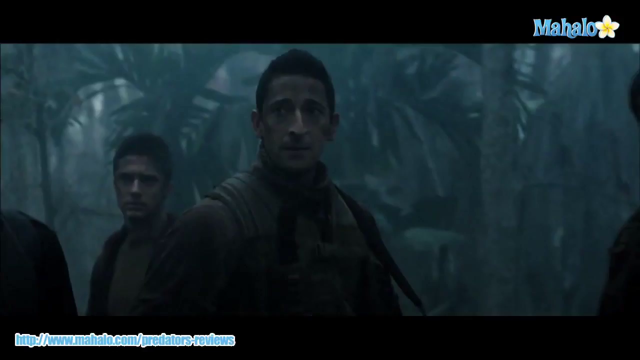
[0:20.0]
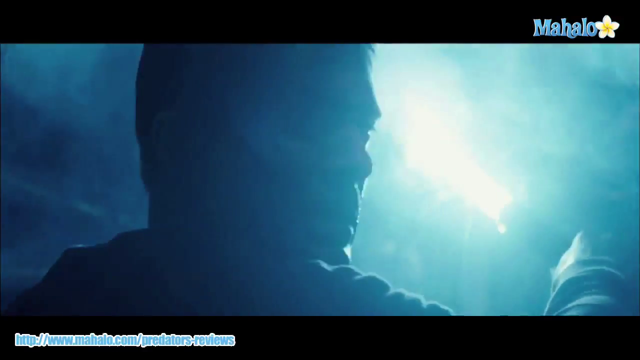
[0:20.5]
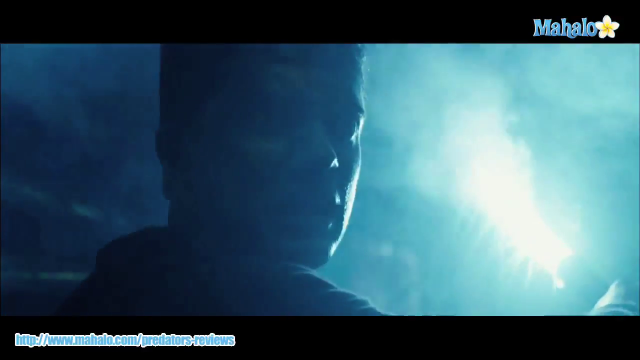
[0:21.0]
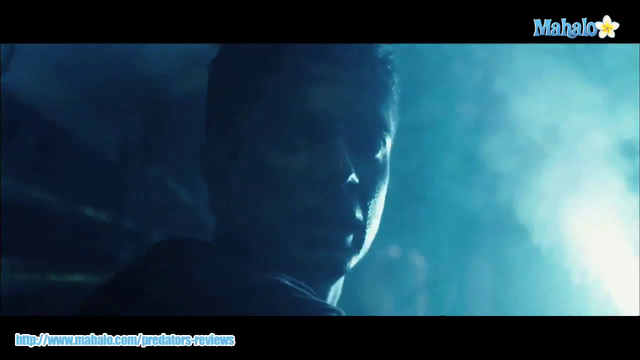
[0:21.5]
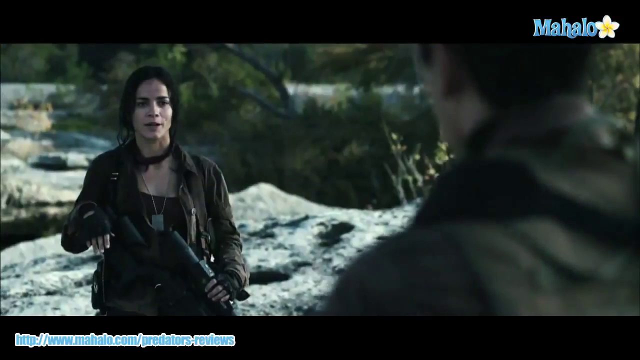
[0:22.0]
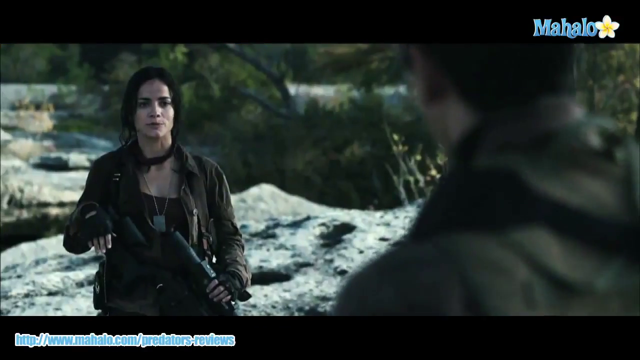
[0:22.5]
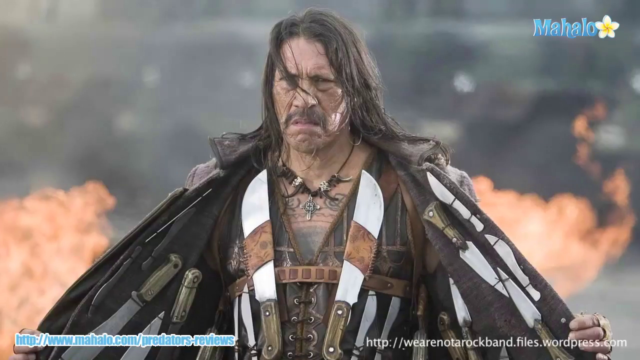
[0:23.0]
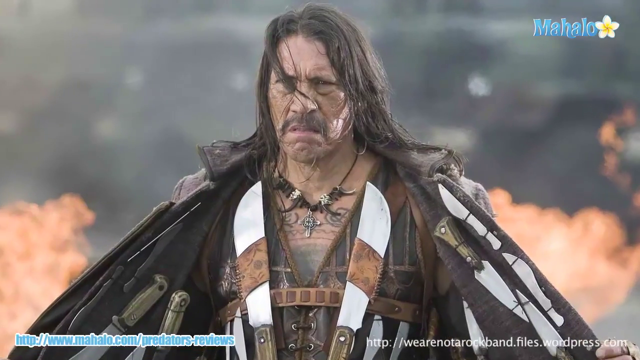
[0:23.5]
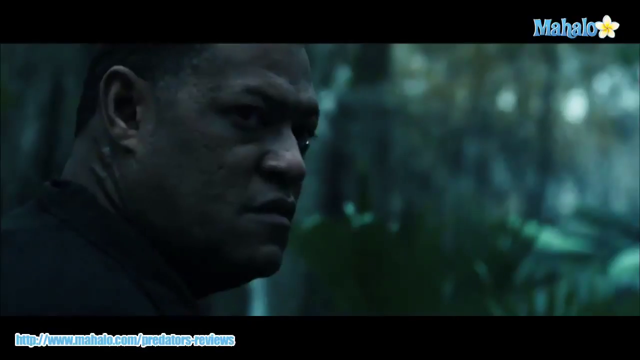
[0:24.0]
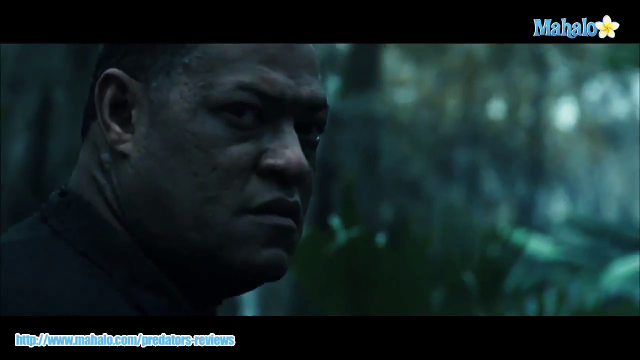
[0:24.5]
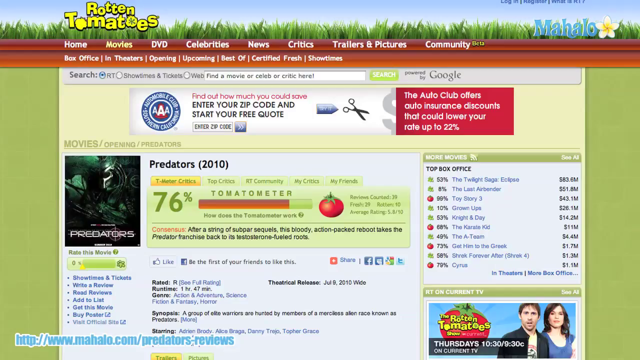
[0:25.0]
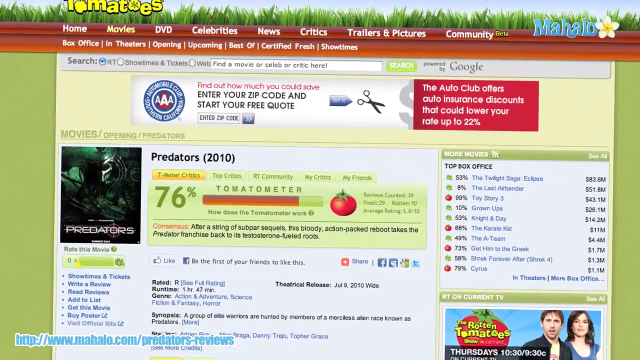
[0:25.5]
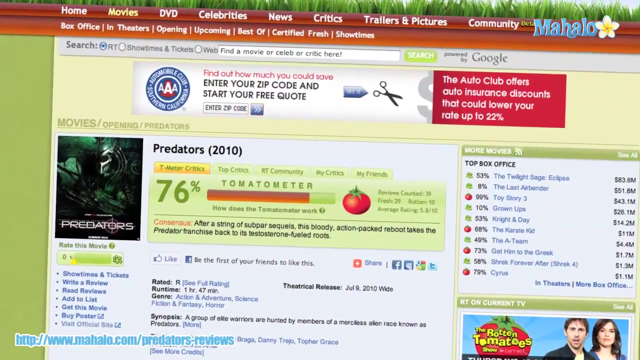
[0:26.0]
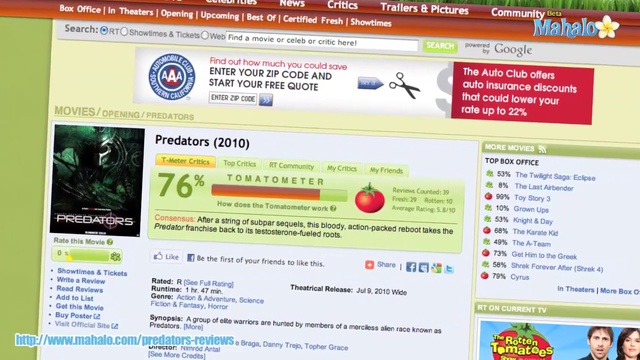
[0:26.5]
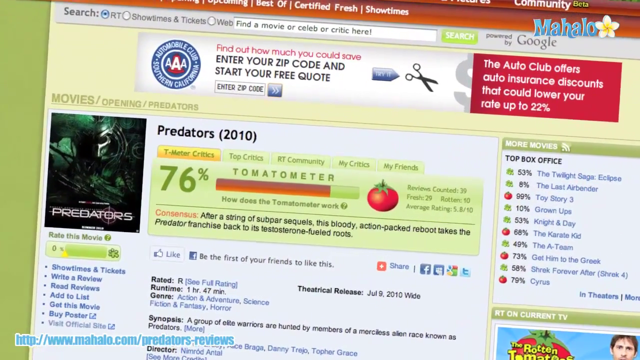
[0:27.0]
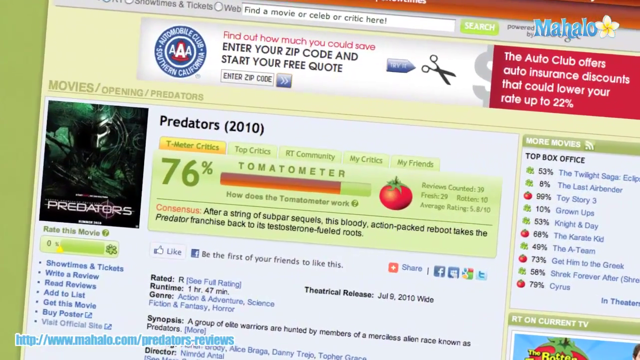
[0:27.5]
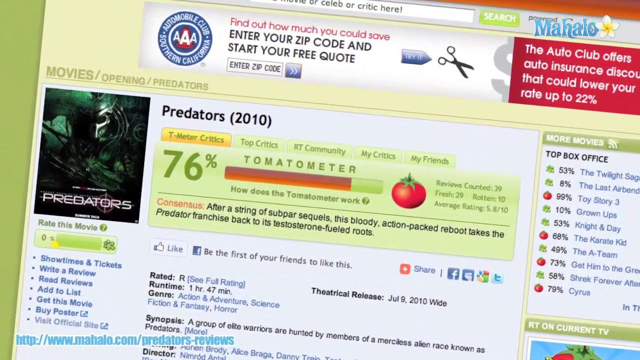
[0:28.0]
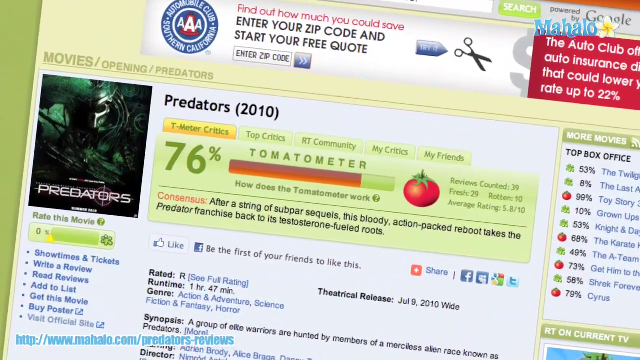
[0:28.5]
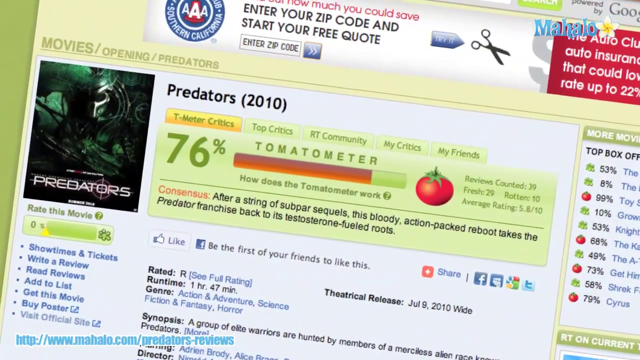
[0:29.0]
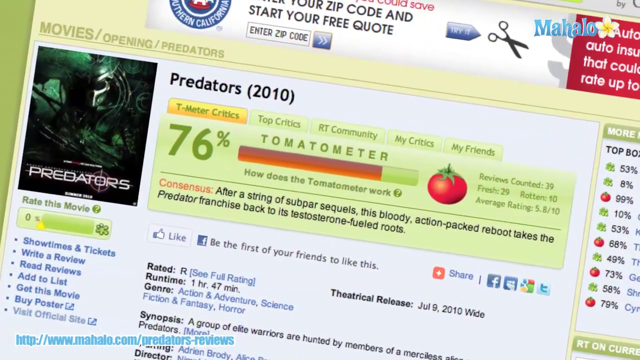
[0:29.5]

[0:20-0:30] A group of survivors, four men, is in a tropical area with palm trees behind them. One of the men spots a woman who has some weapons with her. There is a glimpse of the outfit, then a glimpse of a man, with a tropical sea in the background. A Rotten Tomatoes page shows that Predators (2010) has a 70% tomatometer rating. The consensus text mentions "after a string of subpar sequels" and that the "action-packed reboot takes the Predator franchise back to its testosterone-fueled roots."